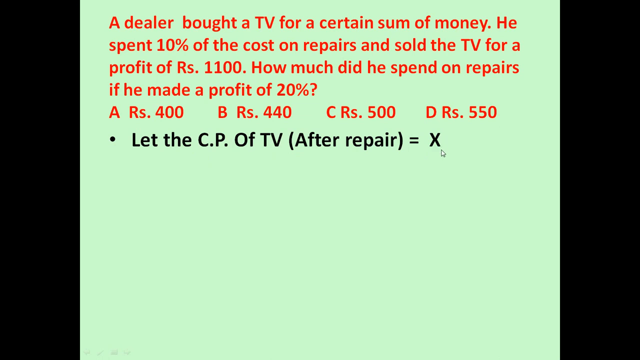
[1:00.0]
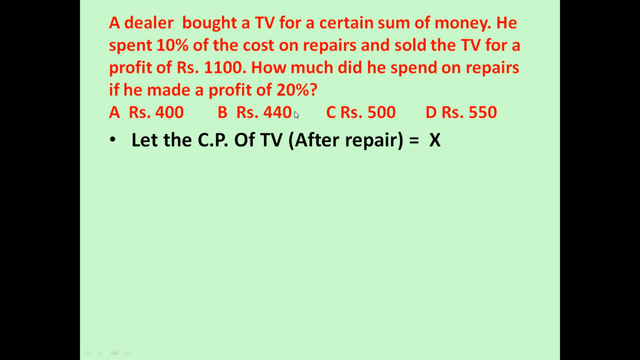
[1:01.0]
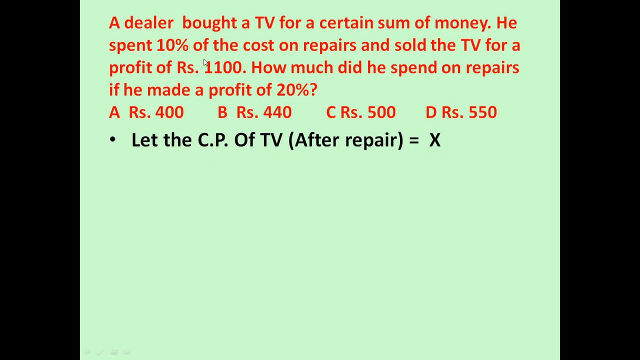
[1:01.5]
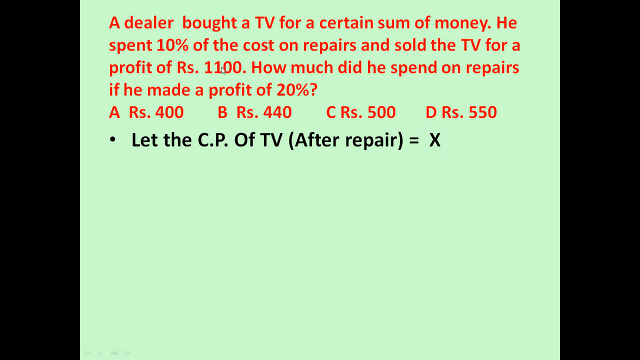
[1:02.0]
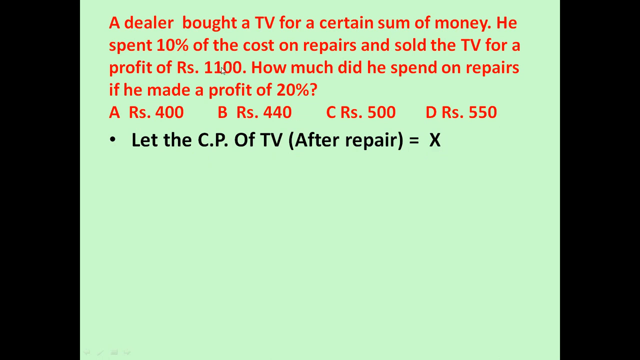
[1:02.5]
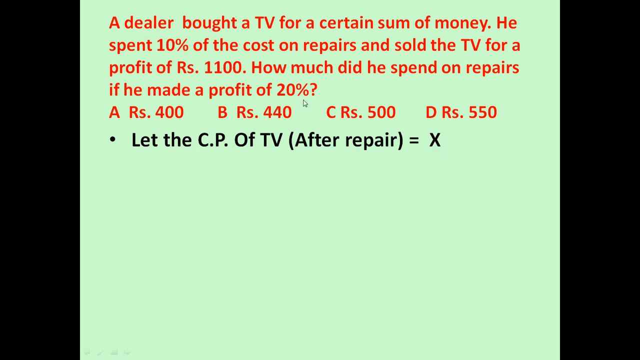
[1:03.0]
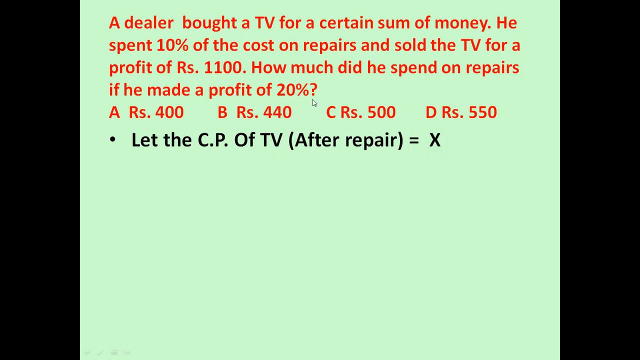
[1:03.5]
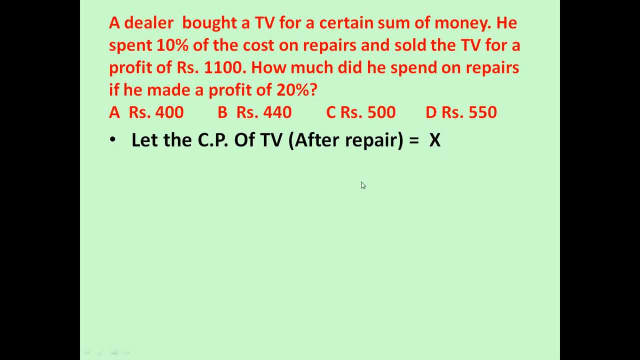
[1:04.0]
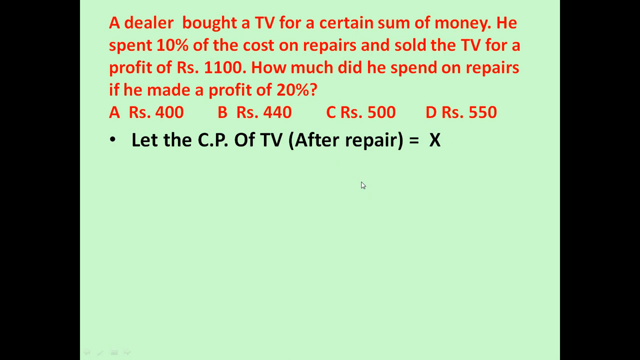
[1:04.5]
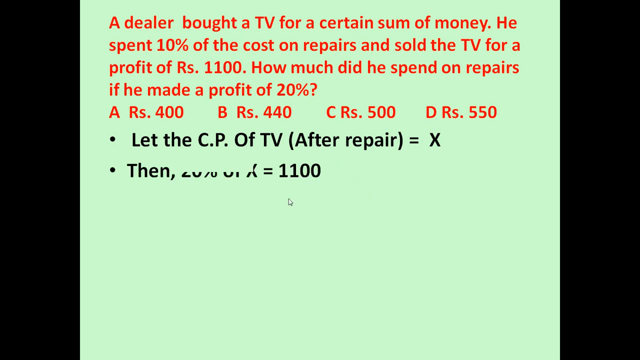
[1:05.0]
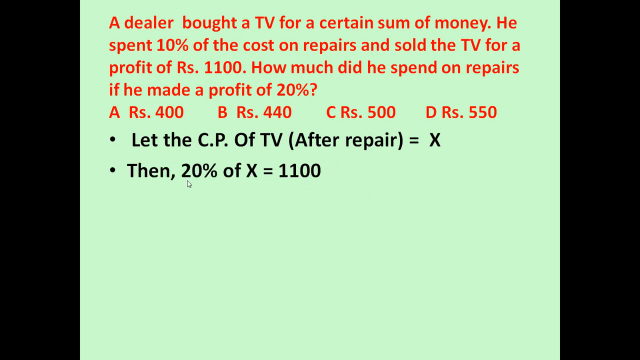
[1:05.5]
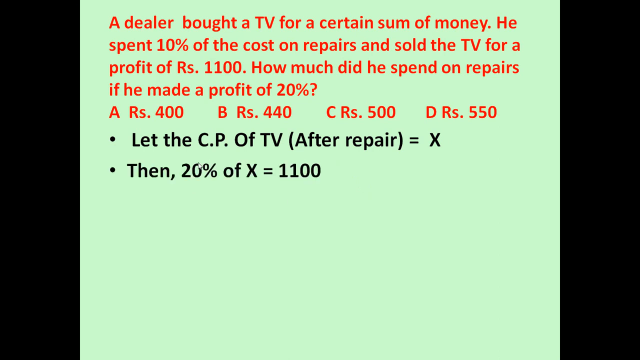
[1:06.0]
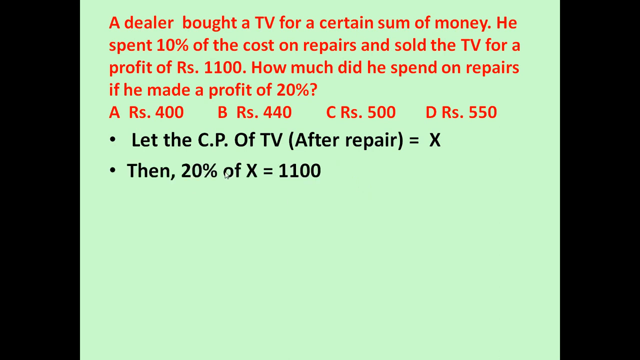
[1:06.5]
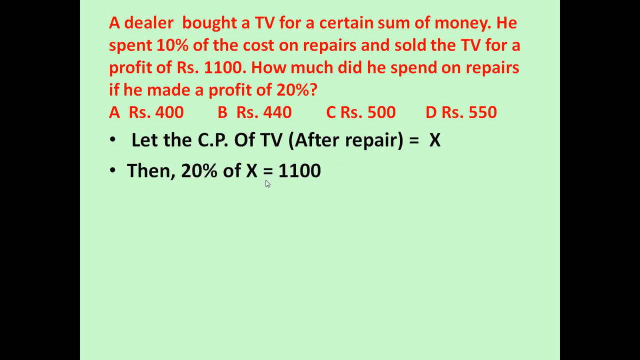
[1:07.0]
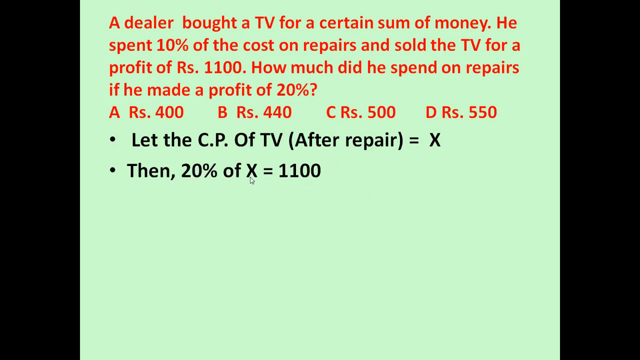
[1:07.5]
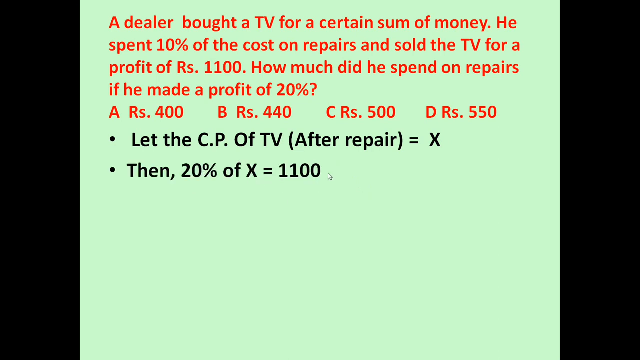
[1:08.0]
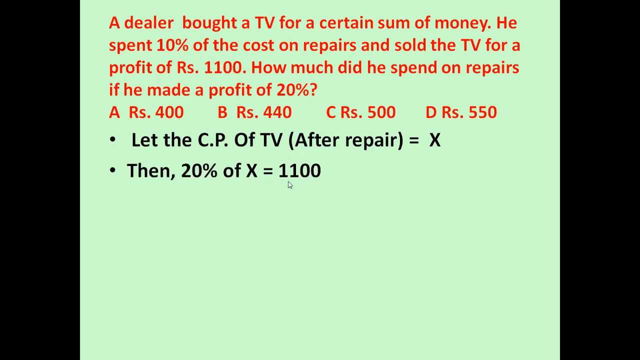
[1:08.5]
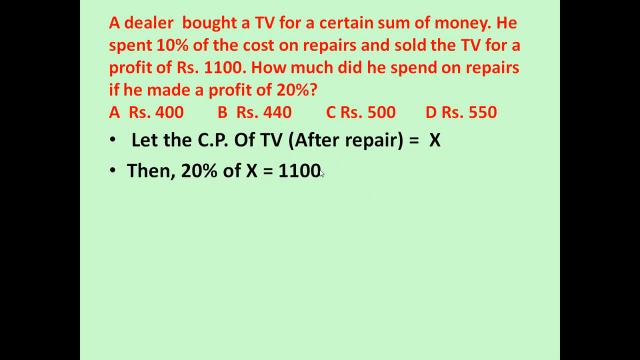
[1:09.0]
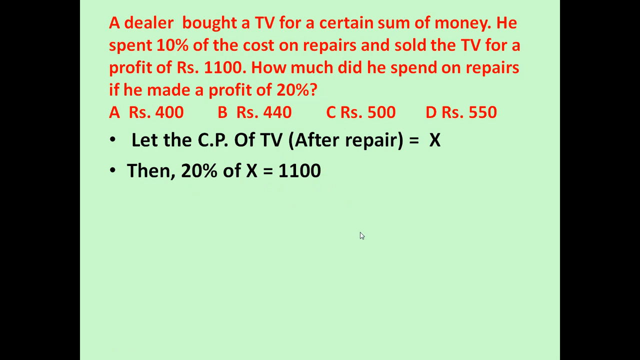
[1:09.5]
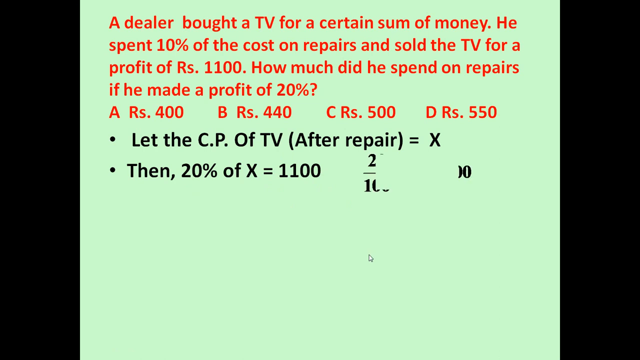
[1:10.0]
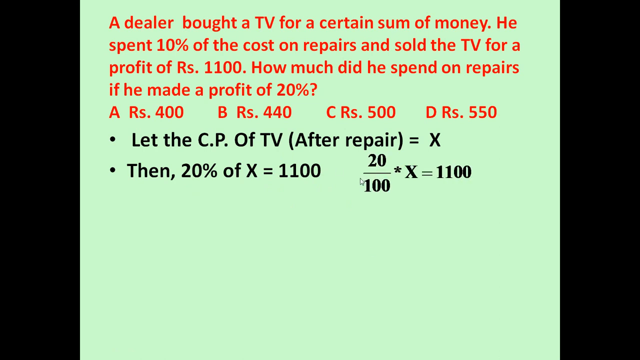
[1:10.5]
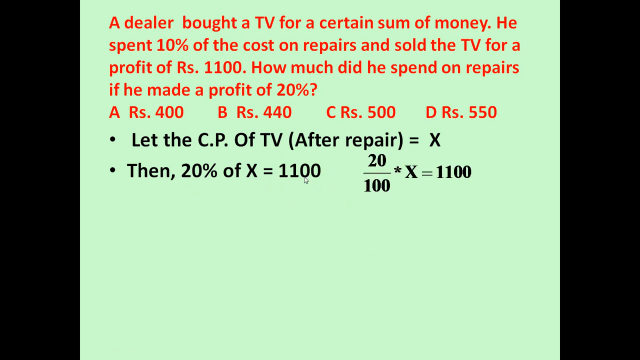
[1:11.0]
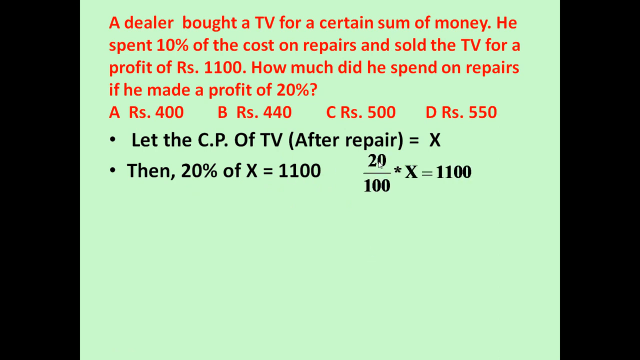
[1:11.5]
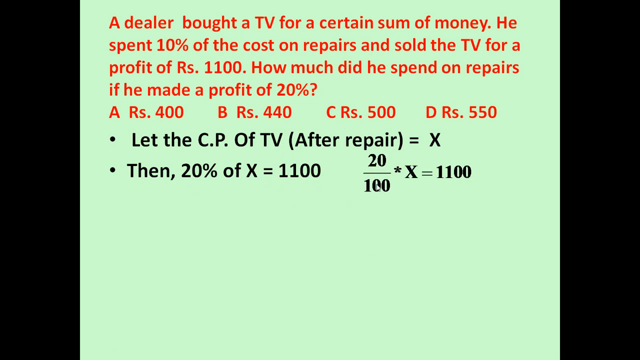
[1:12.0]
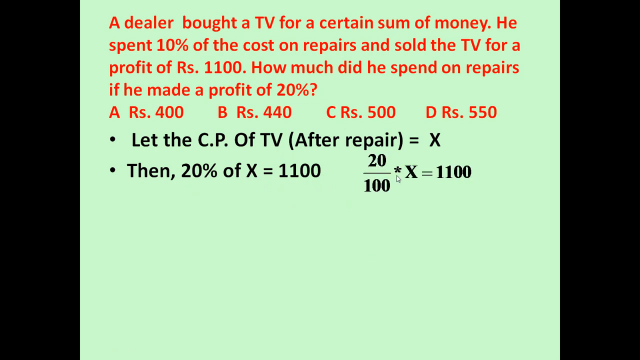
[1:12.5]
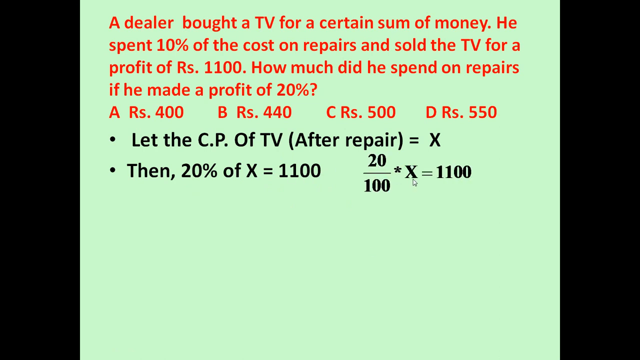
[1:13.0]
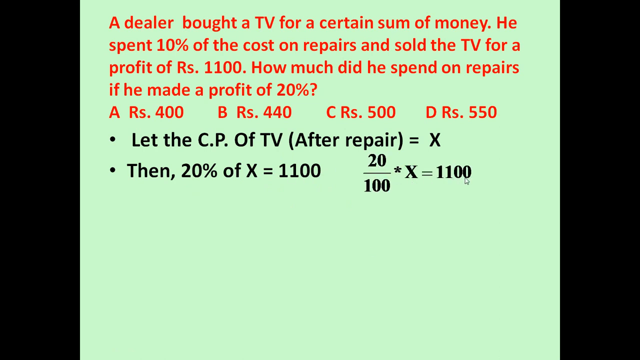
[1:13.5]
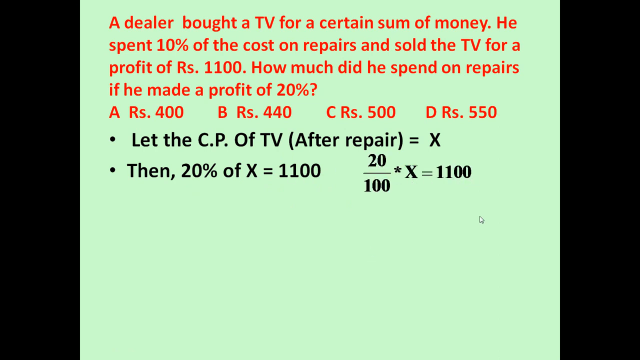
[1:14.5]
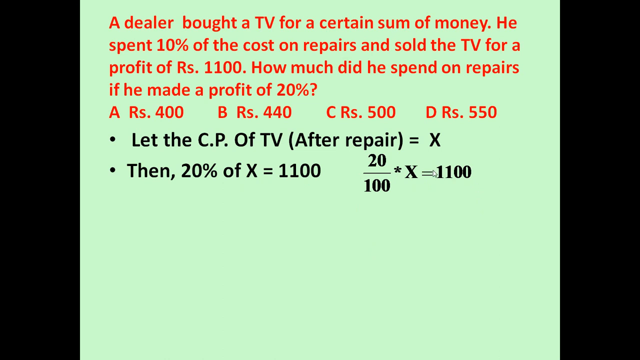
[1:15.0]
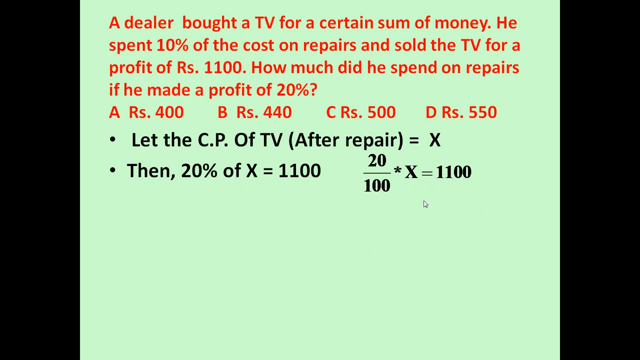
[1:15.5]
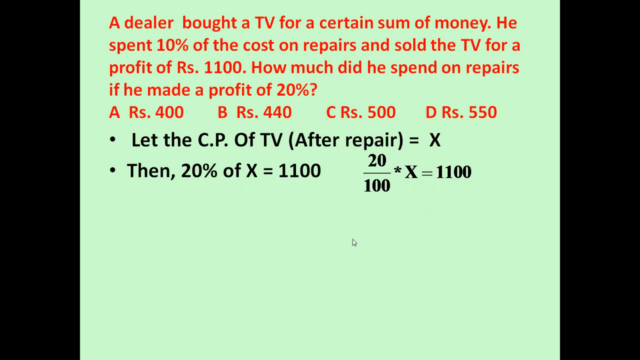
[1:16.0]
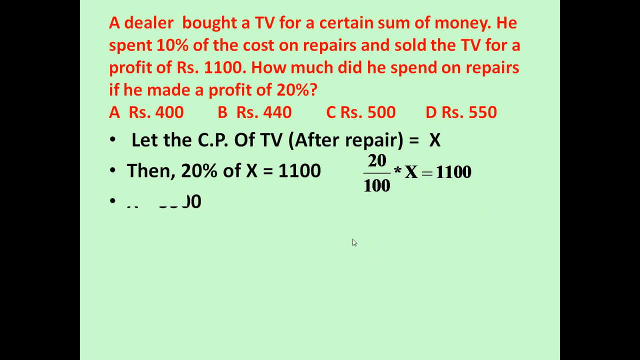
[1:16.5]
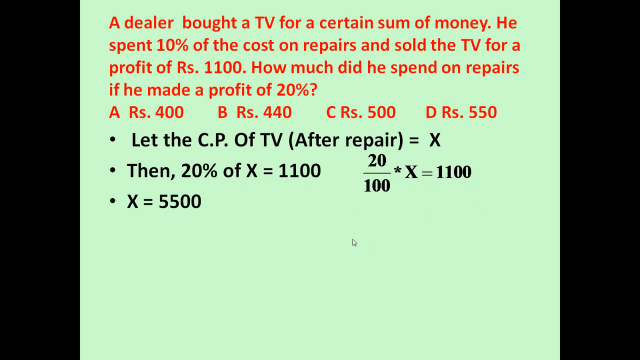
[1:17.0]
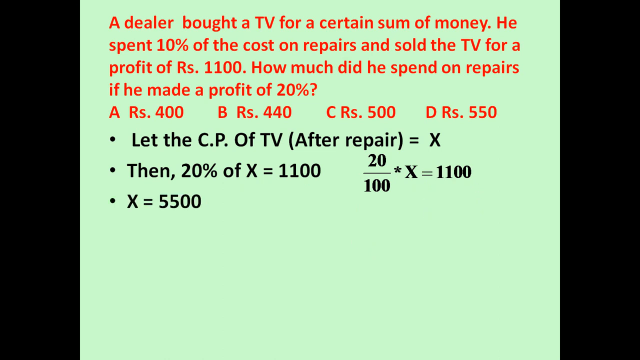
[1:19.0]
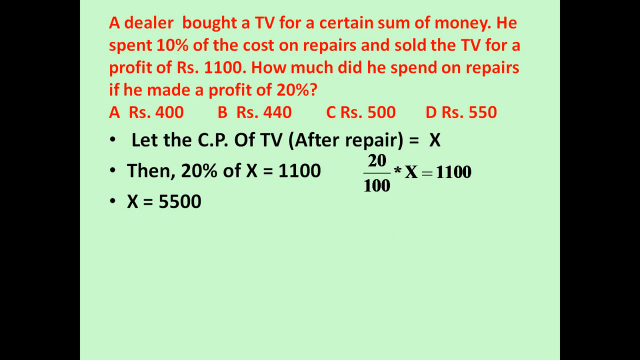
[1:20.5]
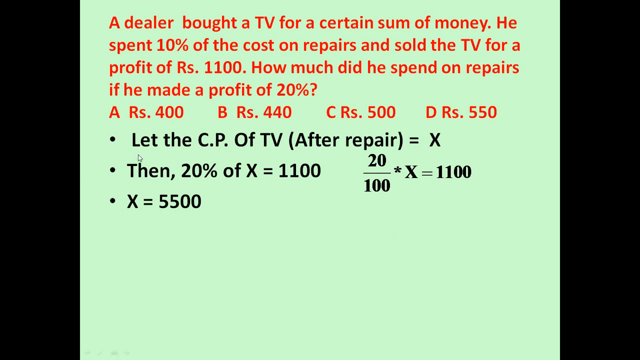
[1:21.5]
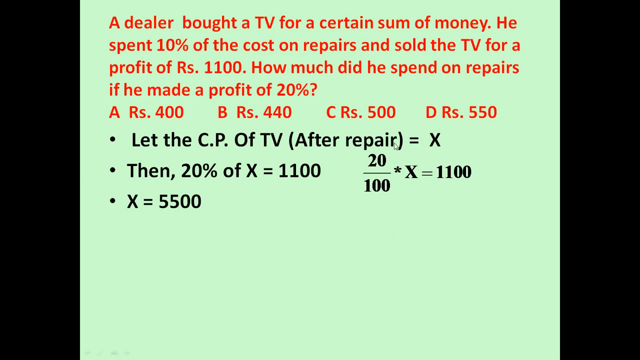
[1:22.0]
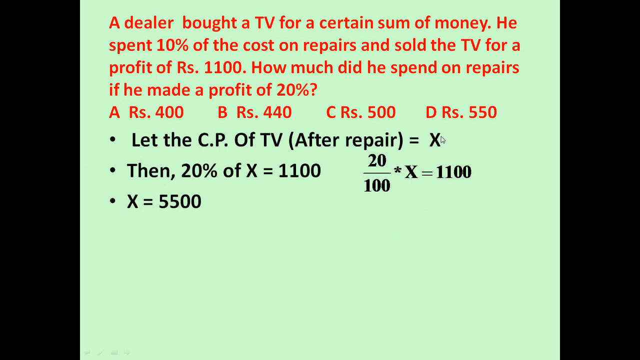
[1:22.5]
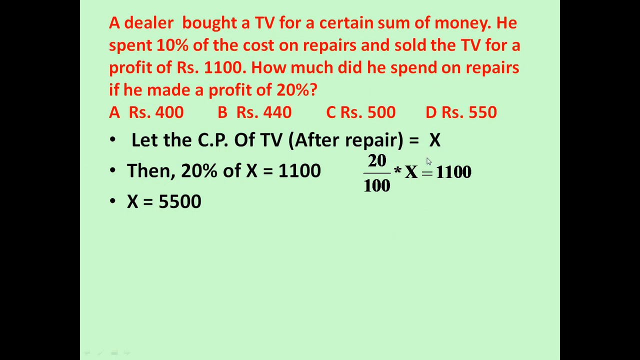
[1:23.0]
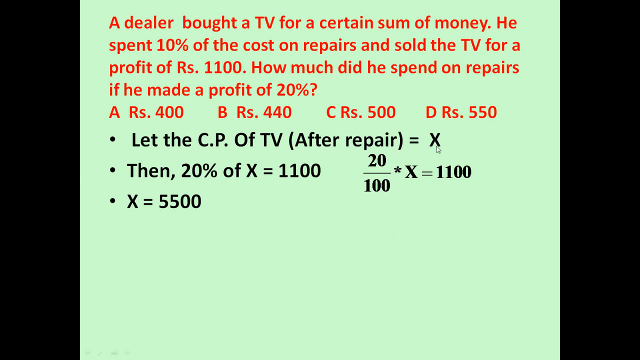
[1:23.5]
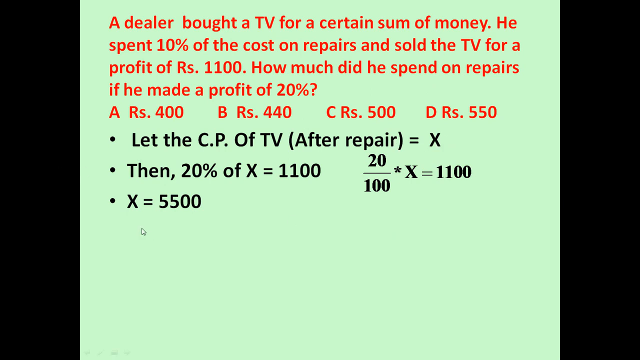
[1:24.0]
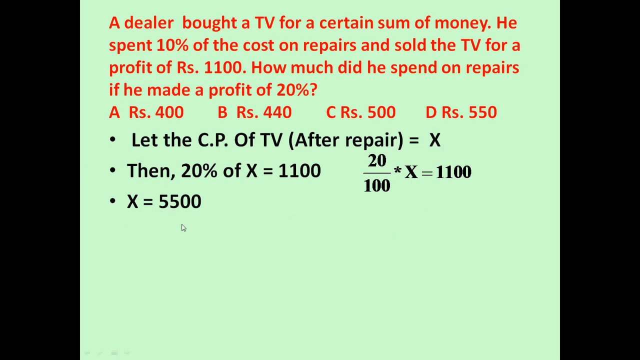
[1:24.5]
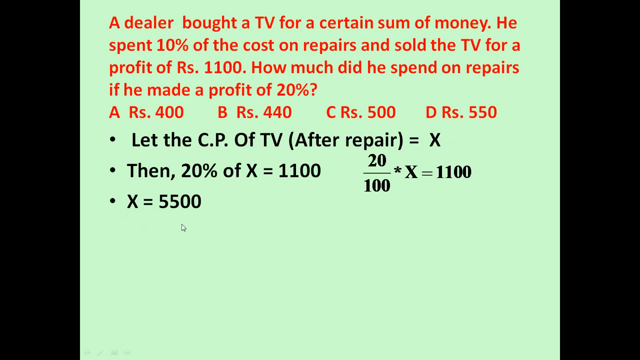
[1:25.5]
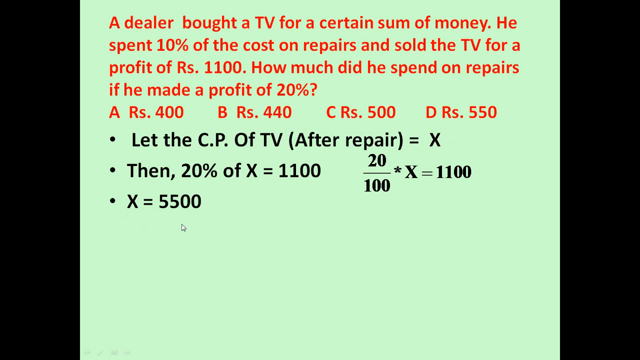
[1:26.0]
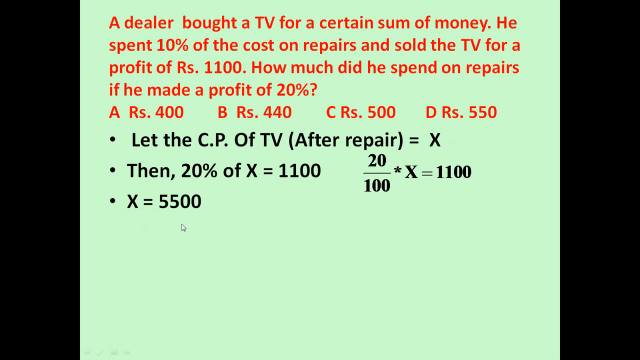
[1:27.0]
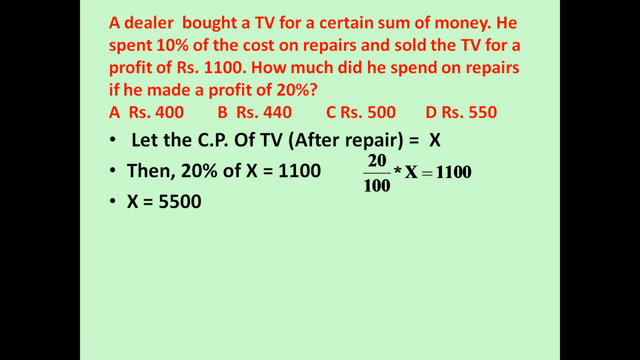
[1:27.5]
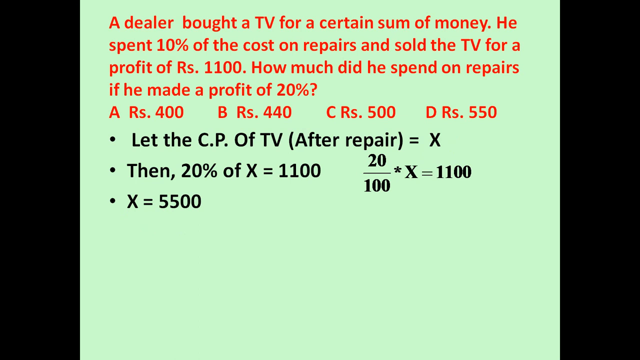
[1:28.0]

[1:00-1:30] A picture shows an Indian man with short hair and a blue shirt, smiling, with his left hand on his chin. Around his picture is his name, A.K. Agarwal, and this is the A.K. Agarwal Aptitude Series about profit and loss number four. Next, a question and four possible answers appear in red letters on a green background. The question reads: "A dealer bought a TV for a certain amount of money. He spent 10% of the cost on repairs and sold the TV for a profit of Rs 1100. How much did he spend on repairs if he made a profit of 20%?" The options are: A, Rs 400; B, Rs 440; C, Rs 500; D, Rs 550. The cursor moves around some parts of the question to emphasise them.